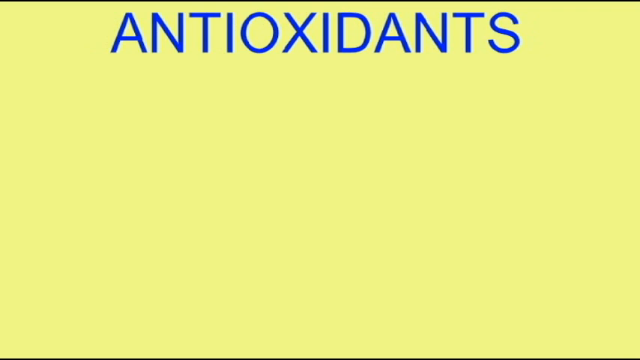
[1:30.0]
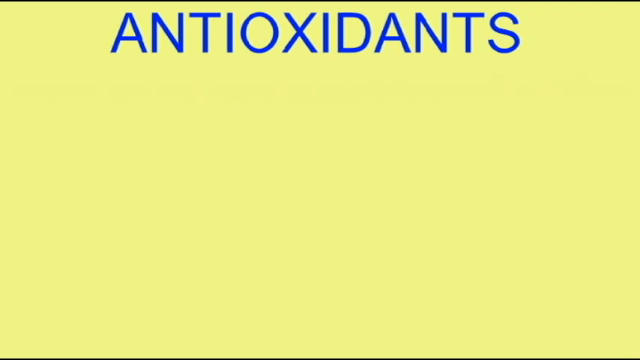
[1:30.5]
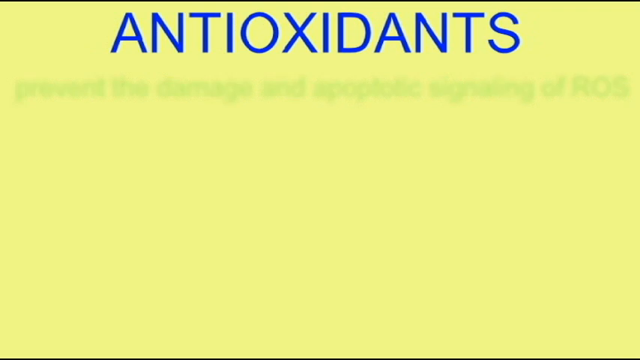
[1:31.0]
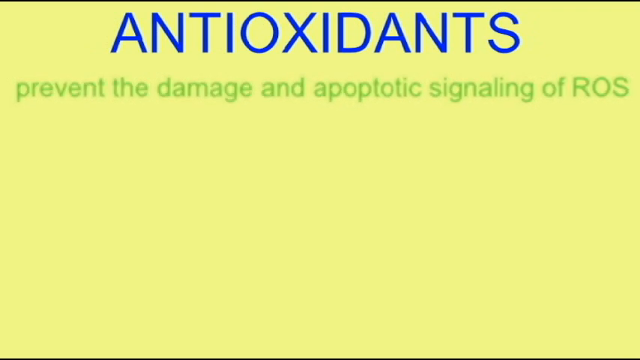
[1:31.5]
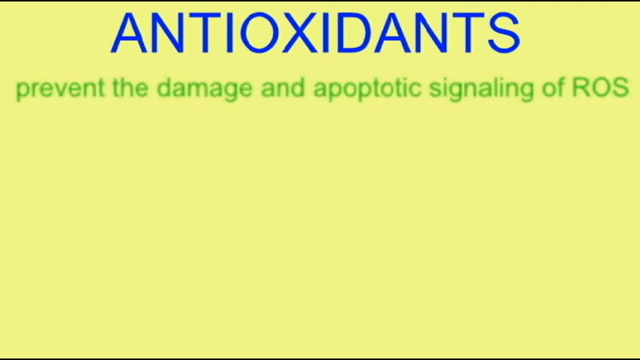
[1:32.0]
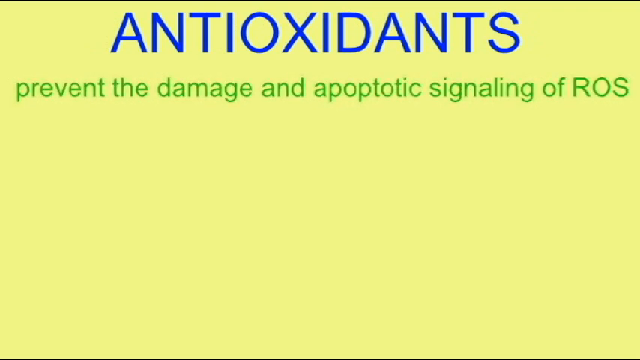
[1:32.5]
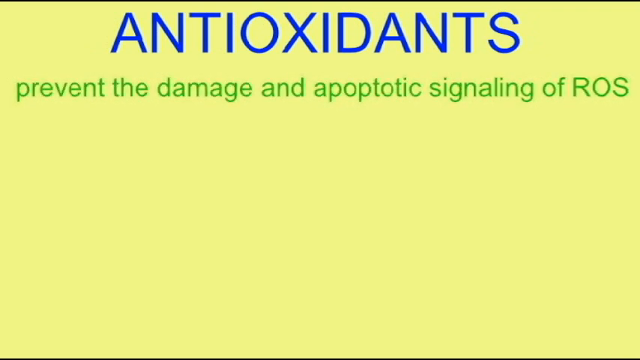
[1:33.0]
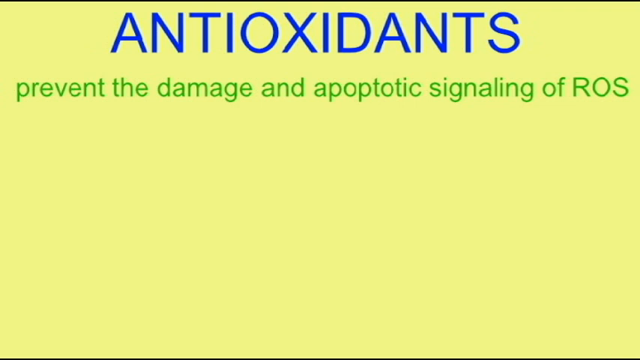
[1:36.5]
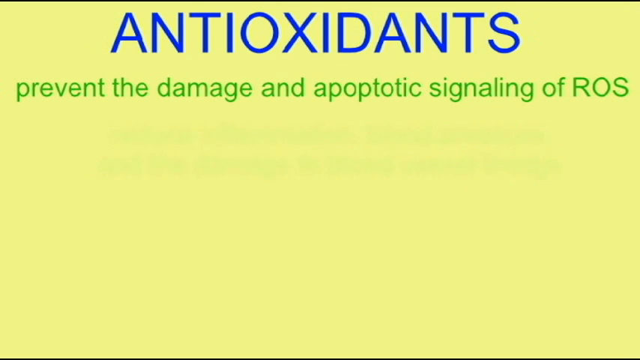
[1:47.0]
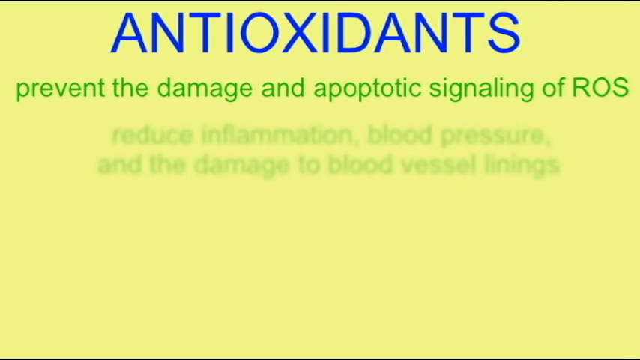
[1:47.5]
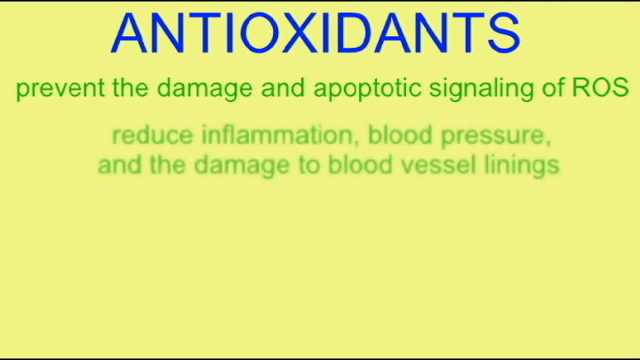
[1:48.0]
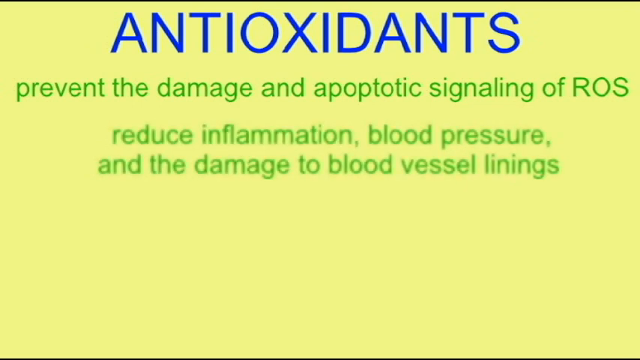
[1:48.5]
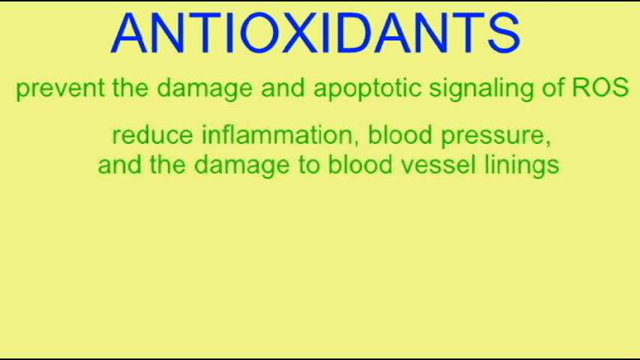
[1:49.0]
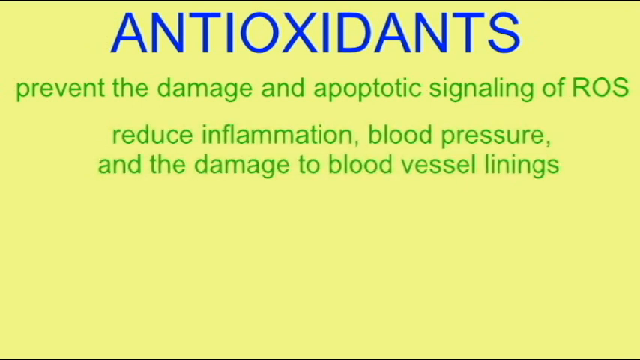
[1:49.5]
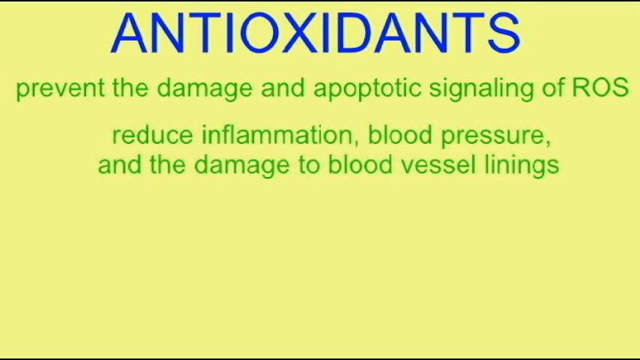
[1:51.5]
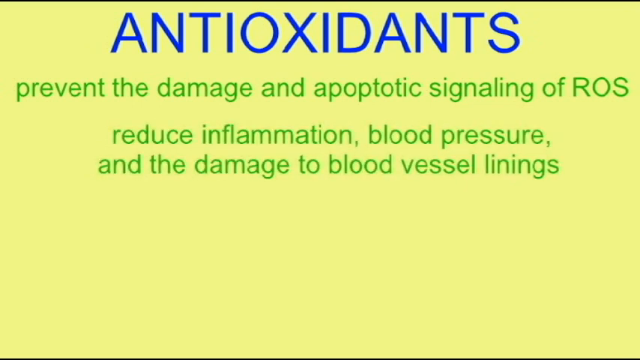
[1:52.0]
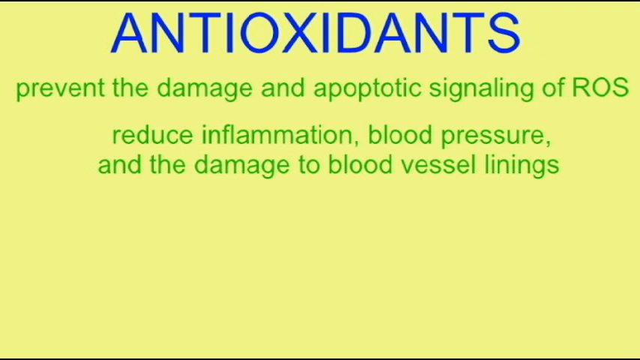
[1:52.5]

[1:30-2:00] A yellow screen shows a blue word in all caps at the top, taking up almost all of the top, reading "ANTIOXIDANTS." Green text appears below it reading "Prevent the damage and apoptotic signaling of ROS," and more green text continues with "reduced inflammation, blood pressure, and the damage to blood vessel linings."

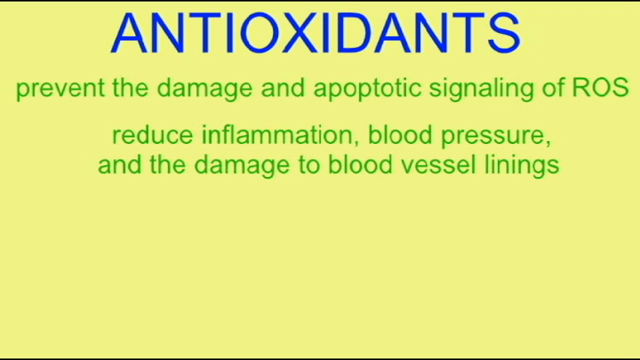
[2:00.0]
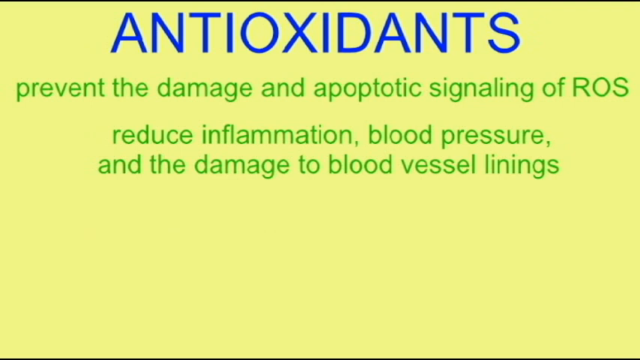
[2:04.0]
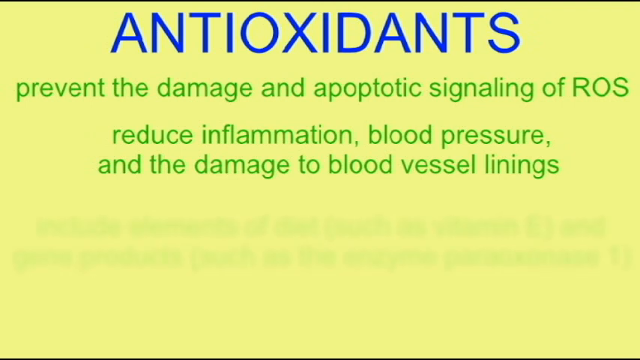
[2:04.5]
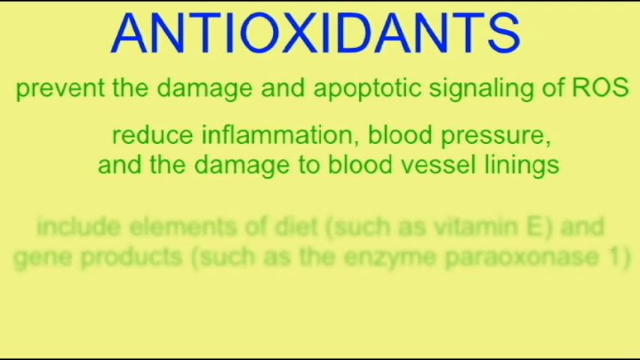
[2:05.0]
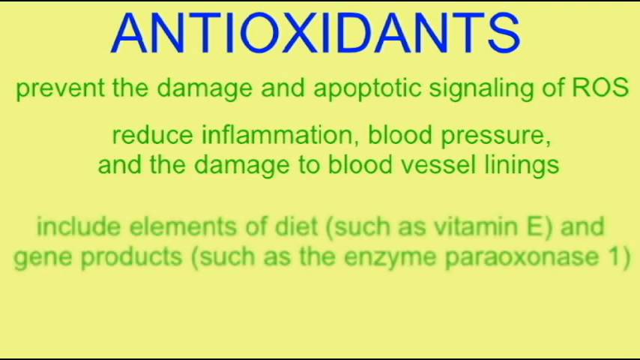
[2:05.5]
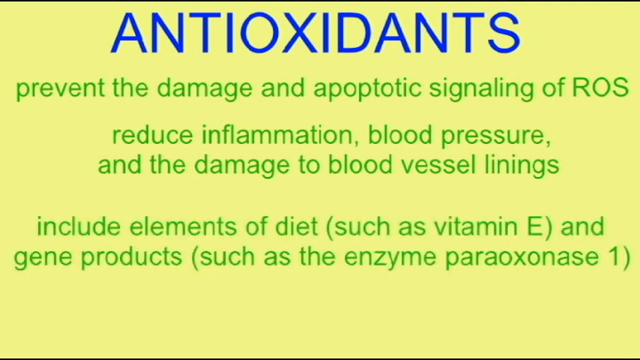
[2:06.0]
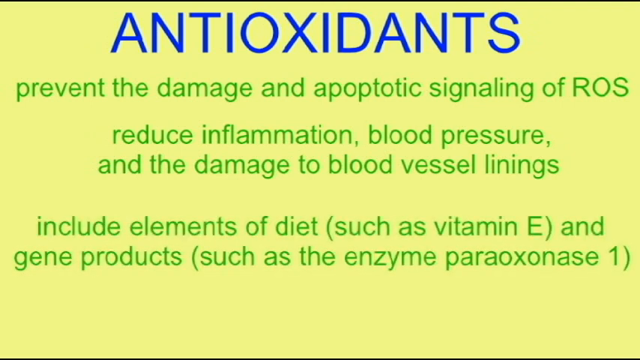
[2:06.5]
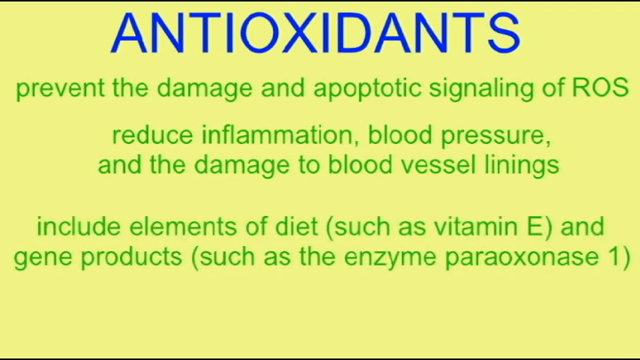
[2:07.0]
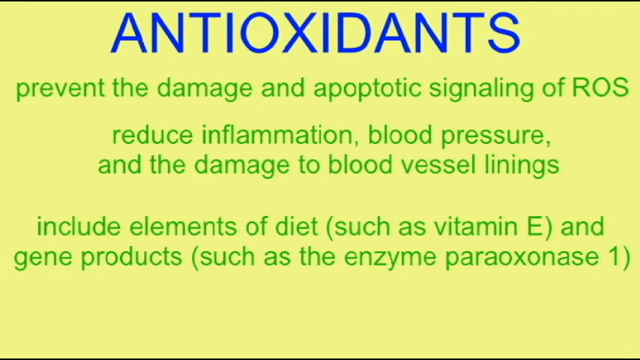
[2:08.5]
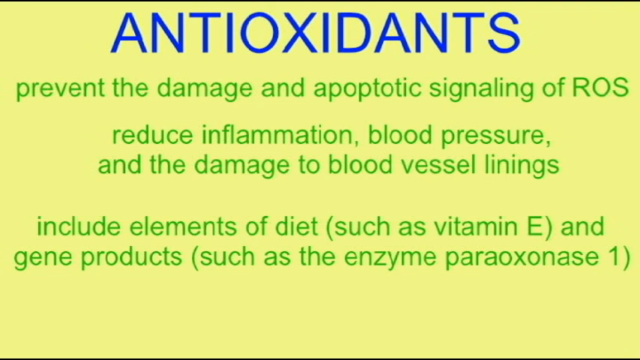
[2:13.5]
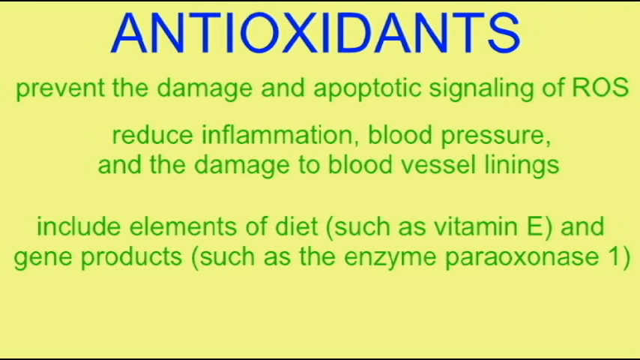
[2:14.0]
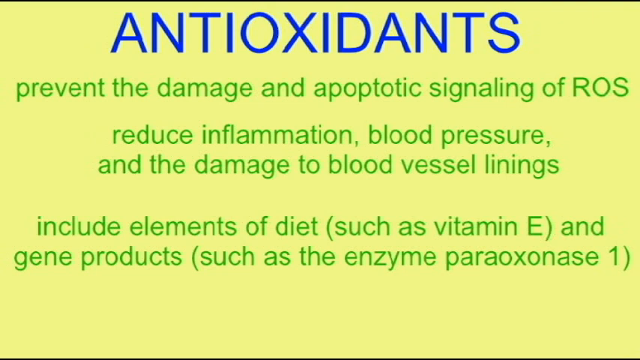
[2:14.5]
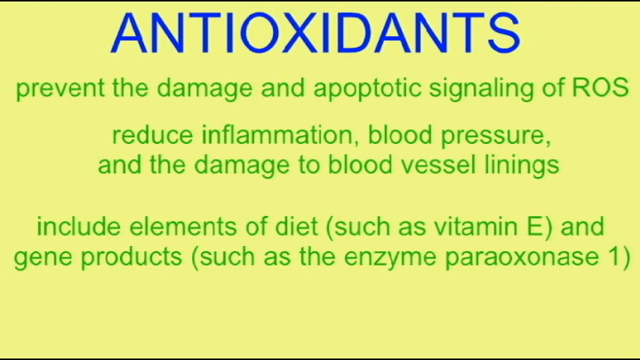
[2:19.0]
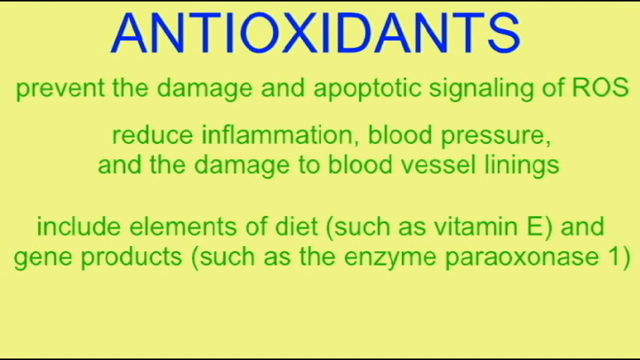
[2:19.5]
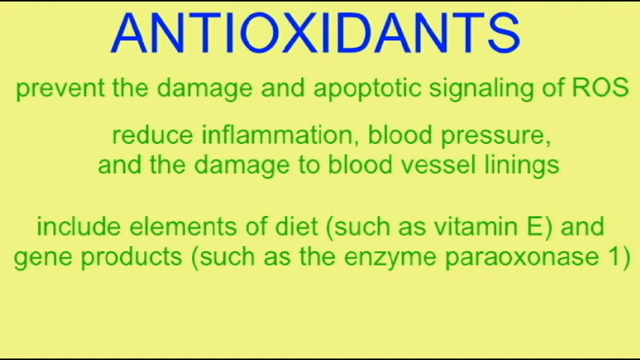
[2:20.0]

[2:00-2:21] Text appears over a light yellow background, described as a light Easter yellow. The top word, in dark blue all caps, reads "antioxidants." Below it, green text about the benefits of antioxidants in the body reads "Antioxidants prevent the damage and apoptotic signaling of ROS, reduce inflammation, blood pressure, and damage to blood vessel linings." The text continues: "Antioxidants include elements of diet such as vitamin E and gene products, such as the enzyme paraoxonase 1." The screen looks like a poster or advertisement, with green text against the yellow background.